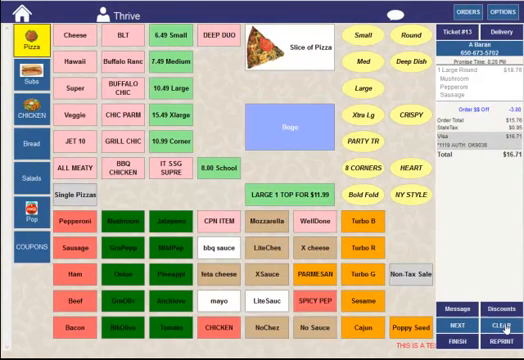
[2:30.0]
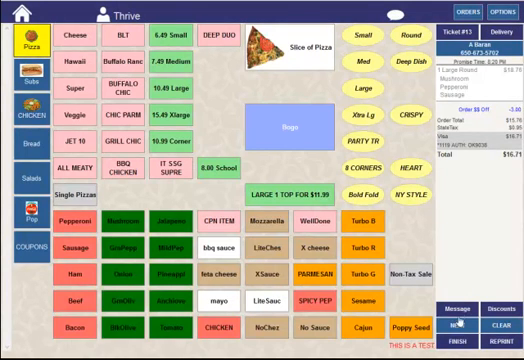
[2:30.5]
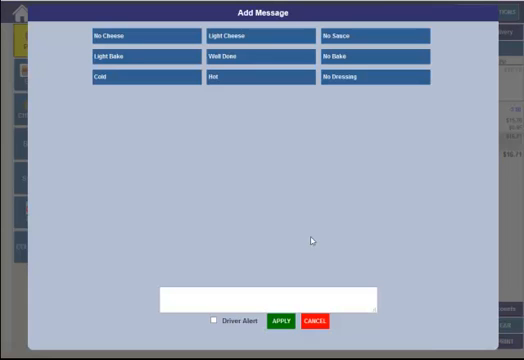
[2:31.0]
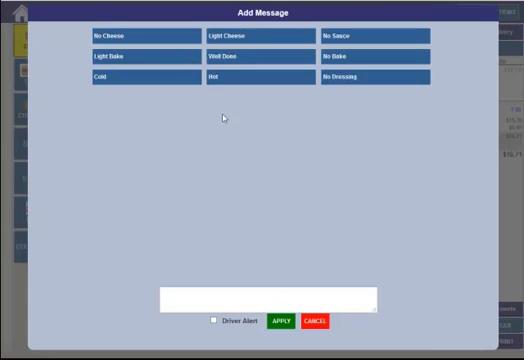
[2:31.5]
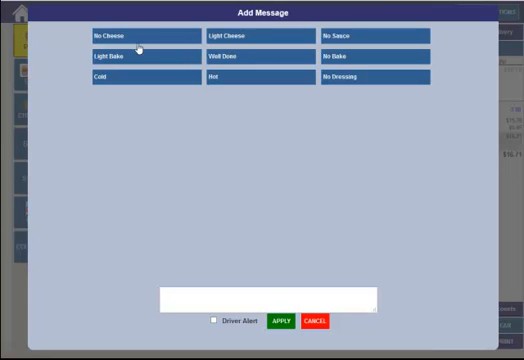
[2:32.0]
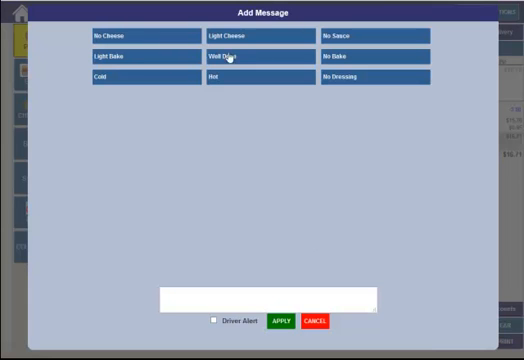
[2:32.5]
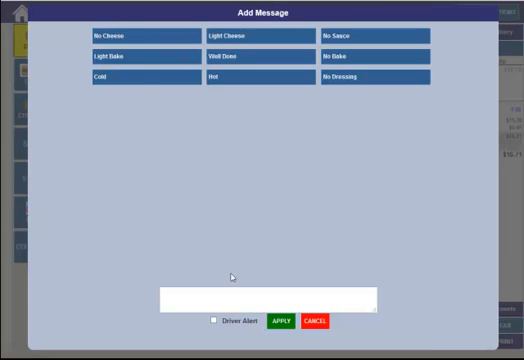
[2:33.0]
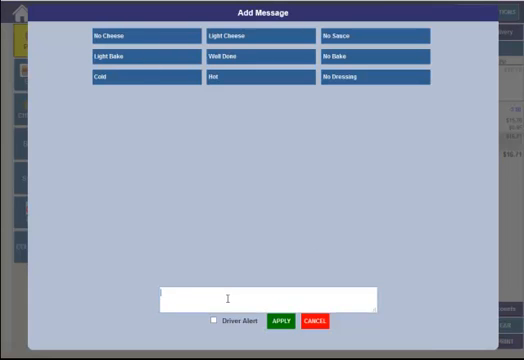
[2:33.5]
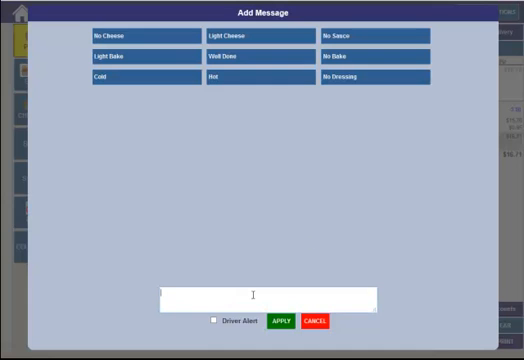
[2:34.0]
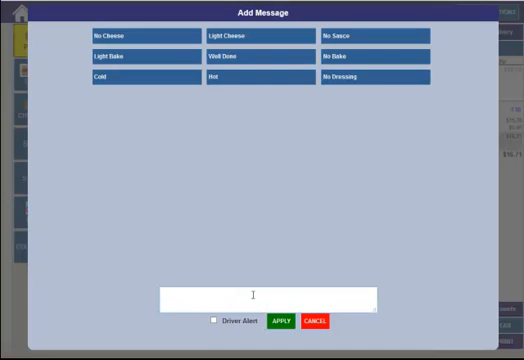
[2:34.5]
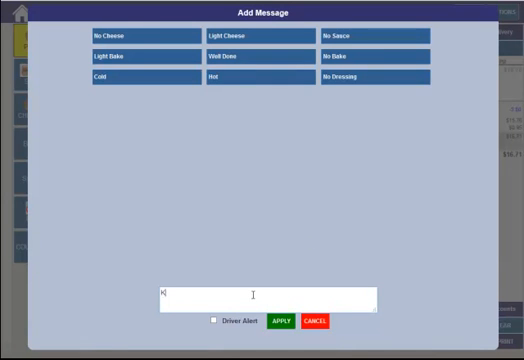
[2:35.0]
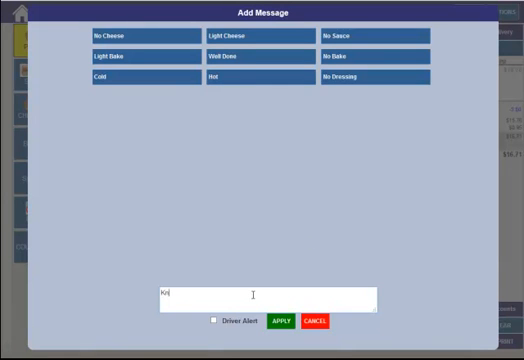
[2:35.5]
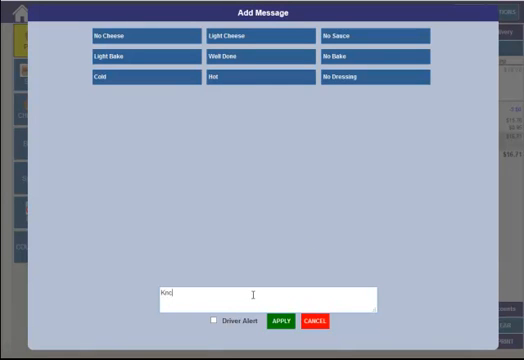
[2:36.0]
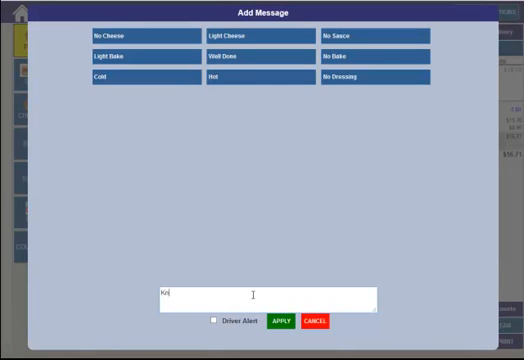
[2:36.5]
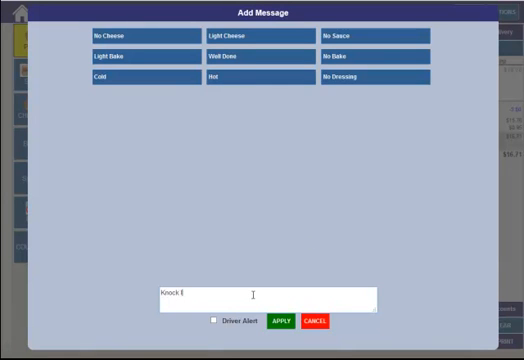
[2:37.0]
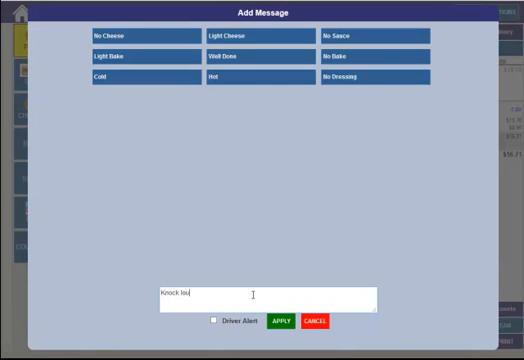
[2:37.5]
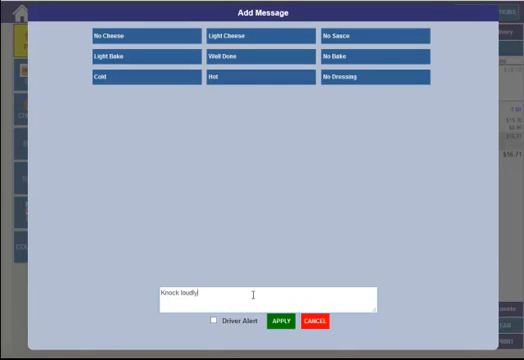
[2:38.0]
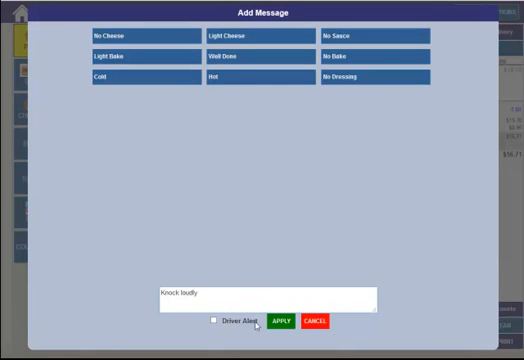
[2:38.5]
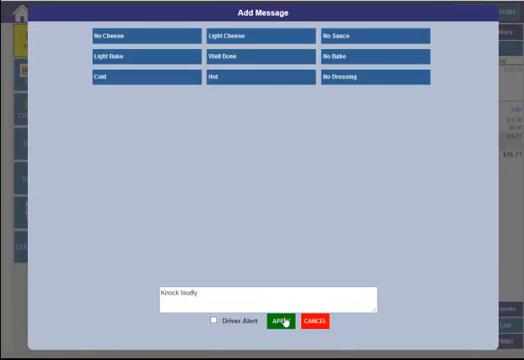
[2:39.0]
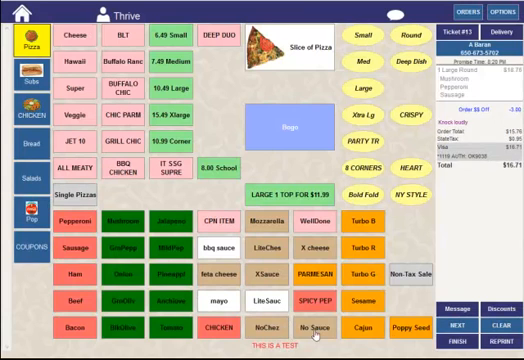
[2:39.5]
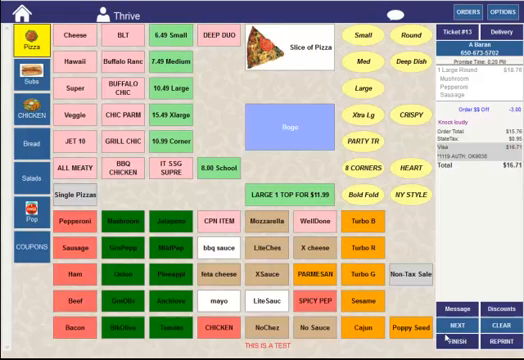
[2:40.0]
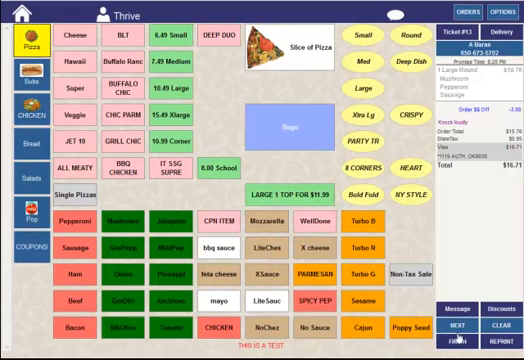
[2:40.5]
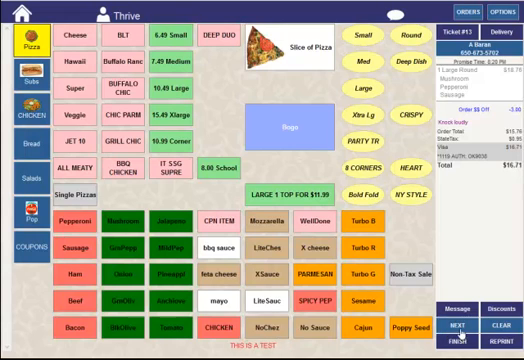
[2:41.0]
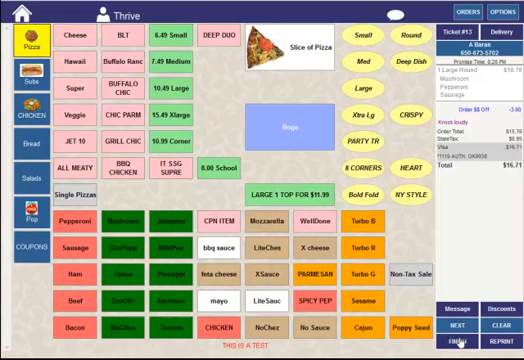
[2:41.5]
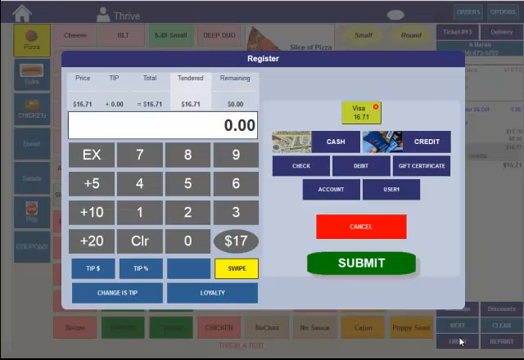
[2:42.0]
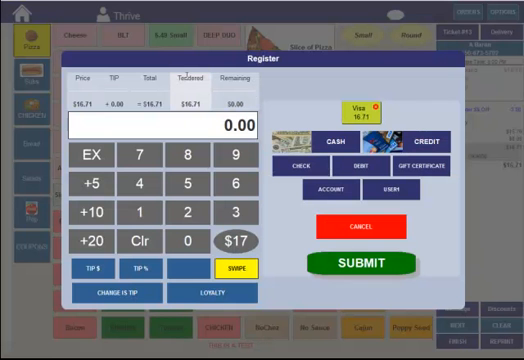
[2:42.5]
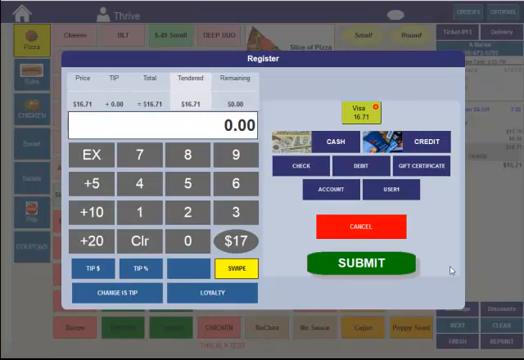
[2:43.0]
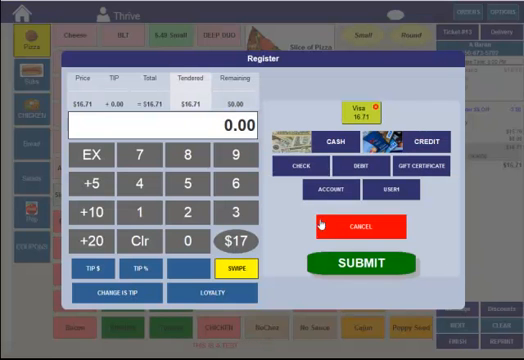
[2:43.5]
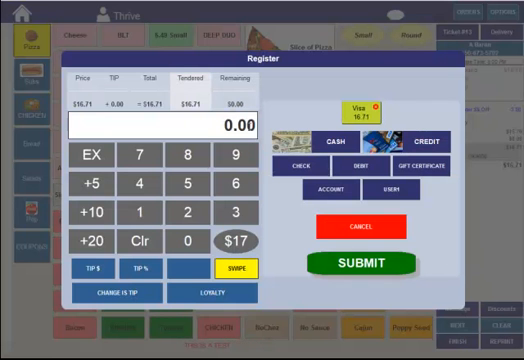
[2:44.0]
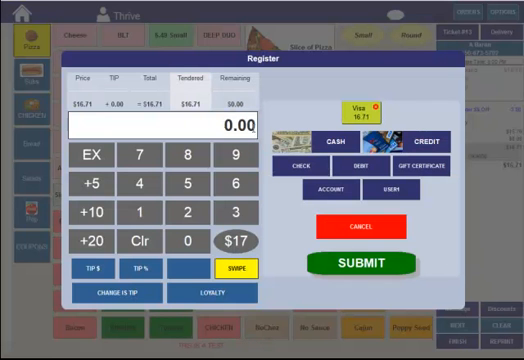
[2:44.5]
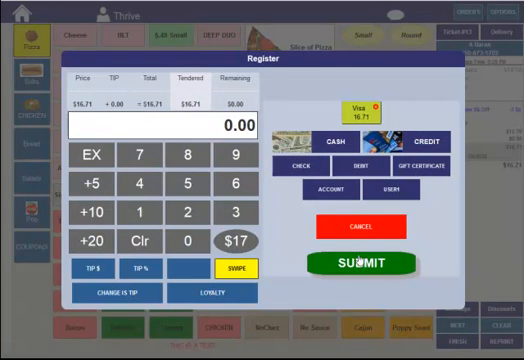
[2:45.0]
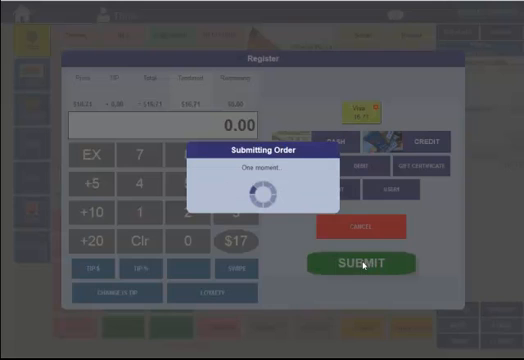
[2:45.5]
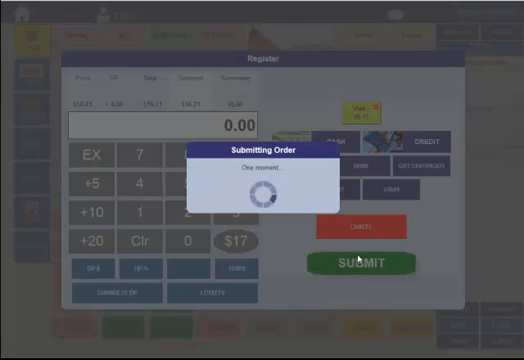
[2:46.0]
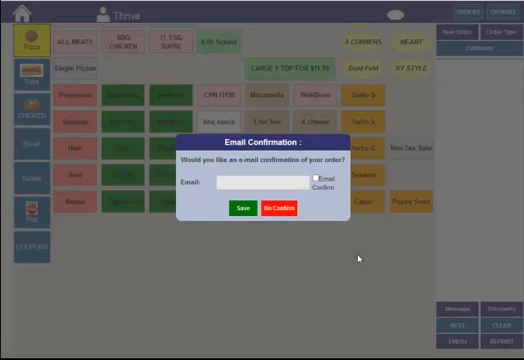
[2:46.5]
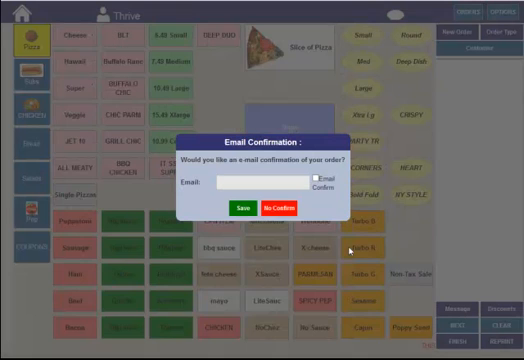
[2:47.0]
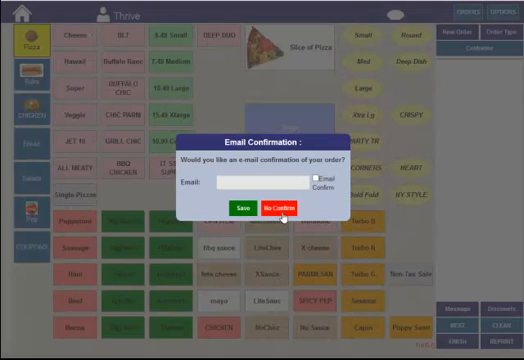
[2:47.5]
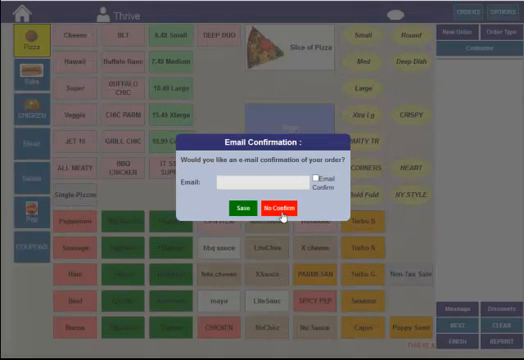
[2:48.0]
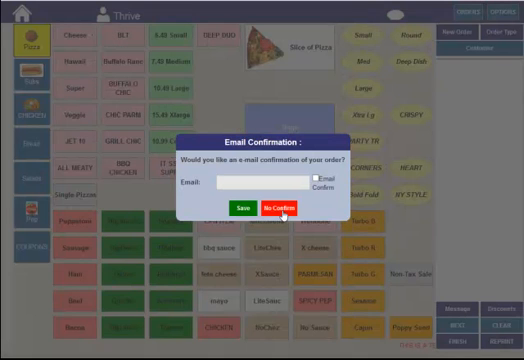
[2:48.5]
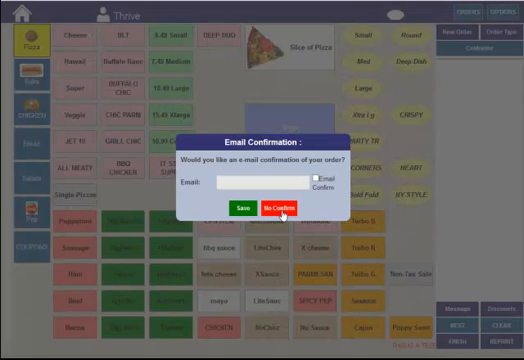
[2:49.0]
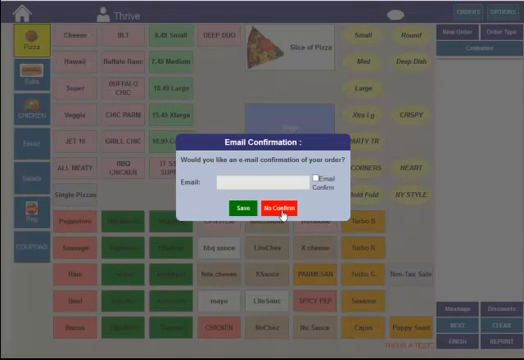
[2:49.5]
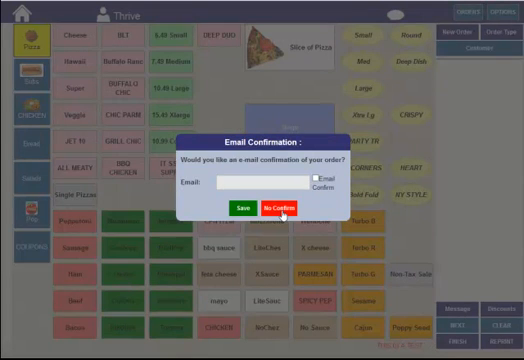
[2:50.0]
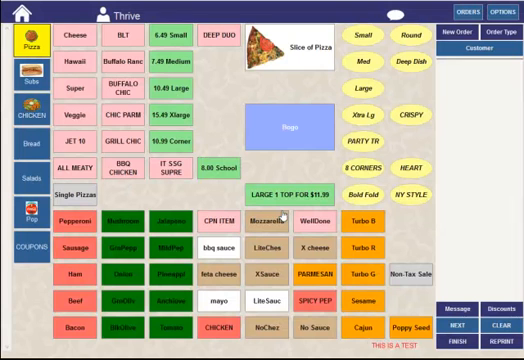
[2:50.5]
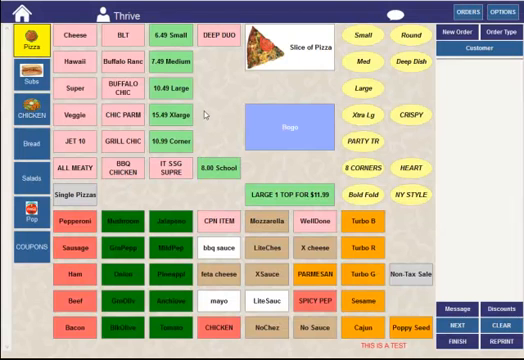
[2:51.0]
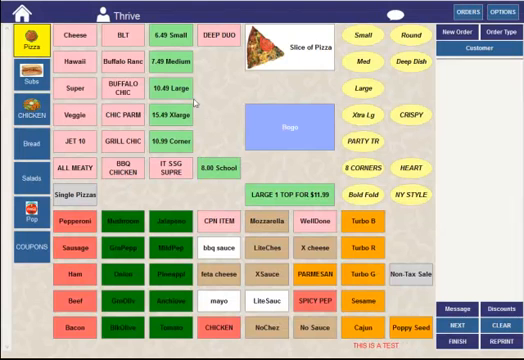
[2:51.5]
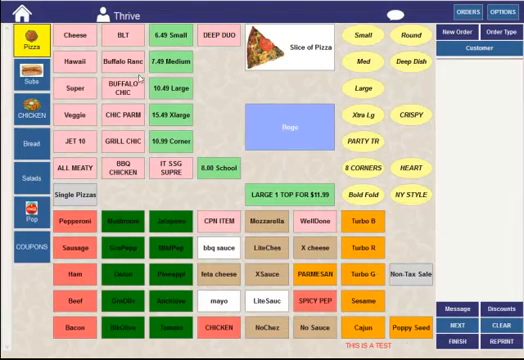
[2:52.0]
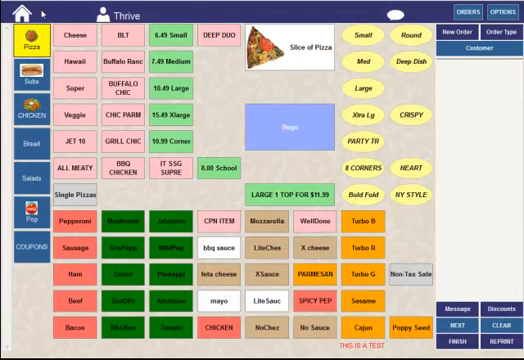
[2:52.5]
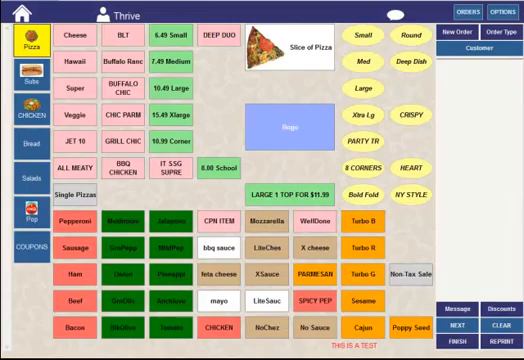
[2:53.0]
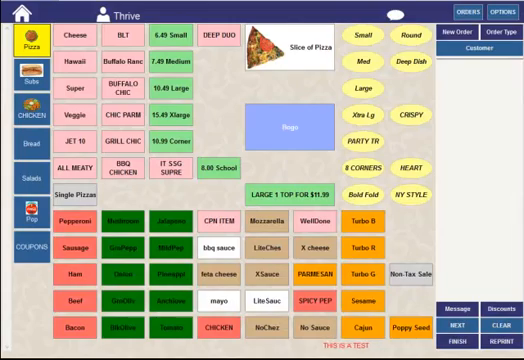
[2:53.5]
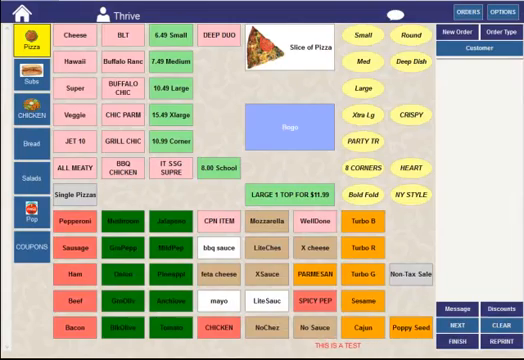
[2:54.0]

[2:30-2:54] A. Barron's order is still in focus. It is order number 650-673-5702, with a $3 discount and a total of $16.71. A different screen appears for adding a message to the order. Instead of clicking one of the nine options at the top, the person goes to the bottom and types the text "knock loudly", then clicks apply. The other nine options in the message center are "No Cheese", "Light Bake", "Cold", "Light Cheese", "Well Done", "Hot", "No Sauce", "No Bake" and "No Dressing". The chosen message is added to the order, the view returns to the register, and submit is clicked to submit the order.